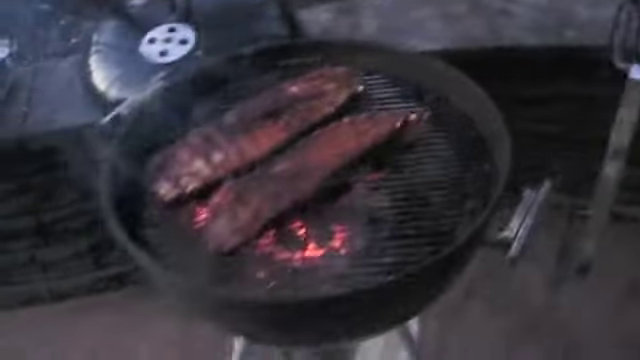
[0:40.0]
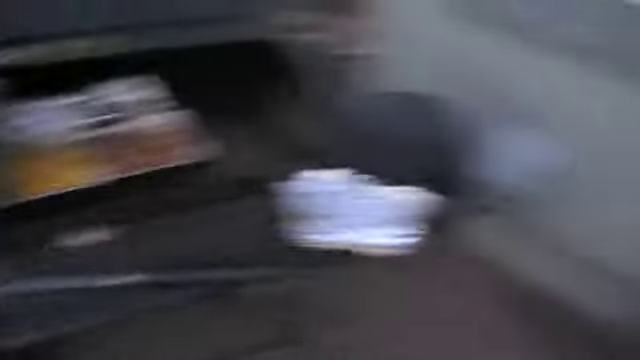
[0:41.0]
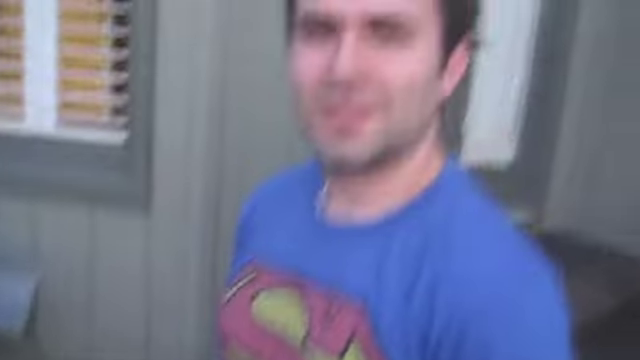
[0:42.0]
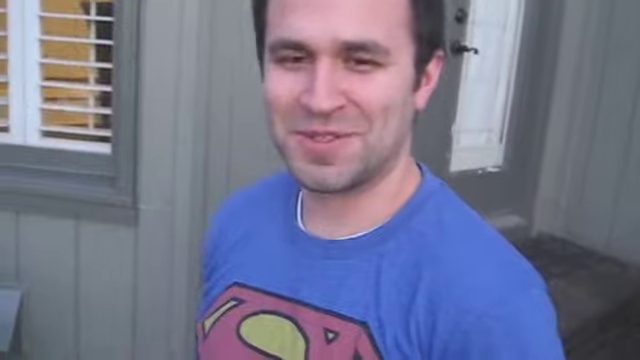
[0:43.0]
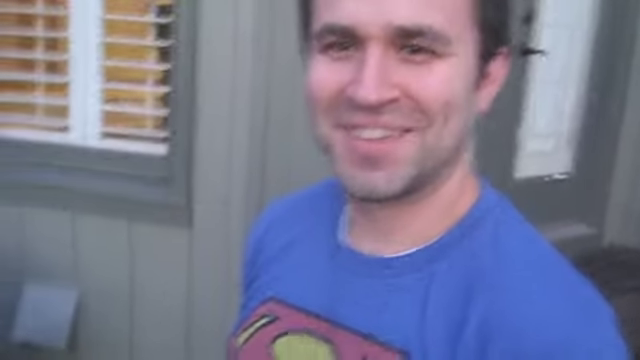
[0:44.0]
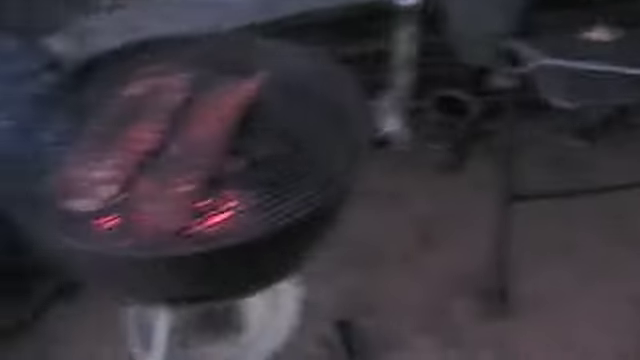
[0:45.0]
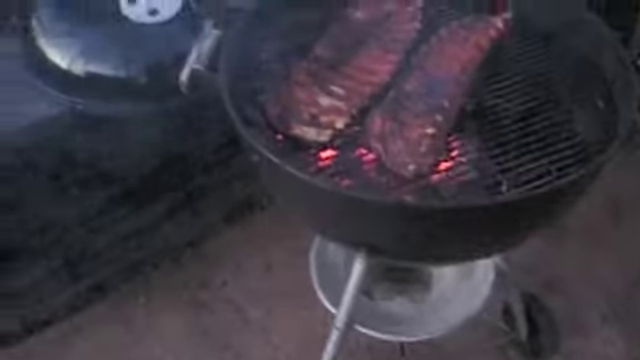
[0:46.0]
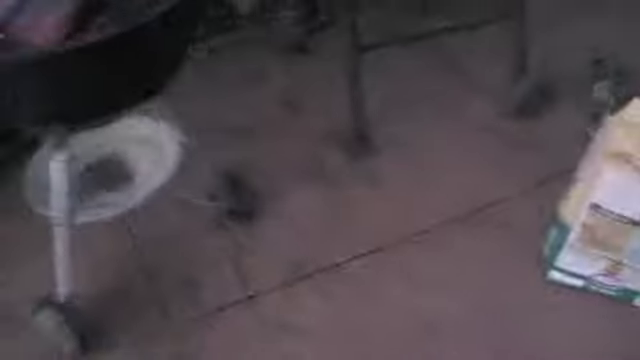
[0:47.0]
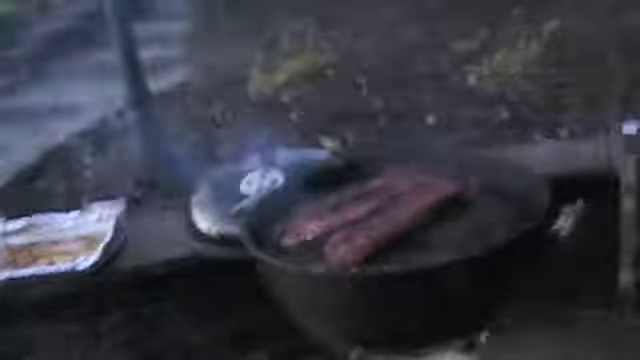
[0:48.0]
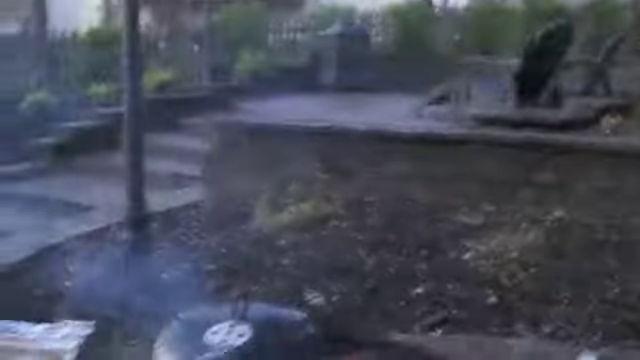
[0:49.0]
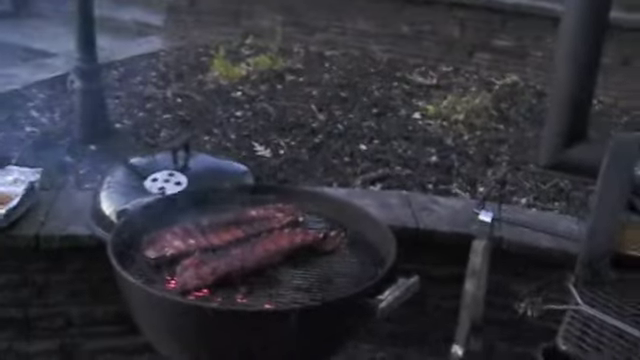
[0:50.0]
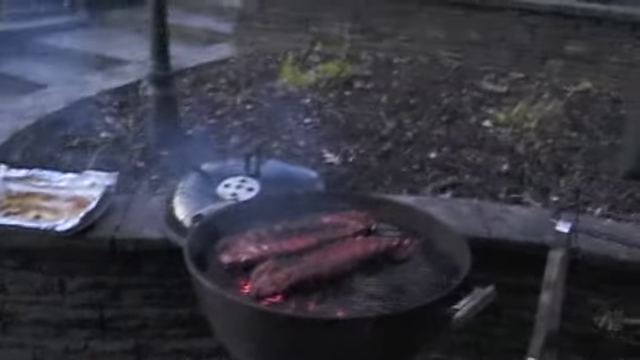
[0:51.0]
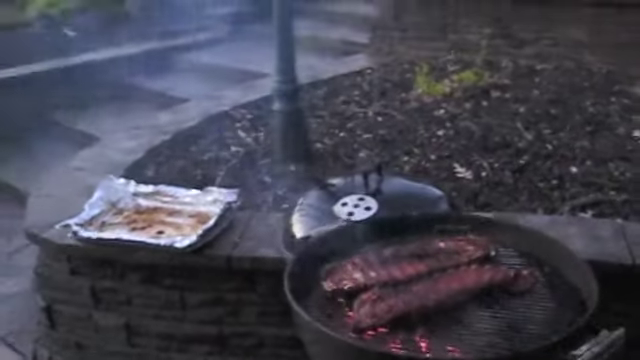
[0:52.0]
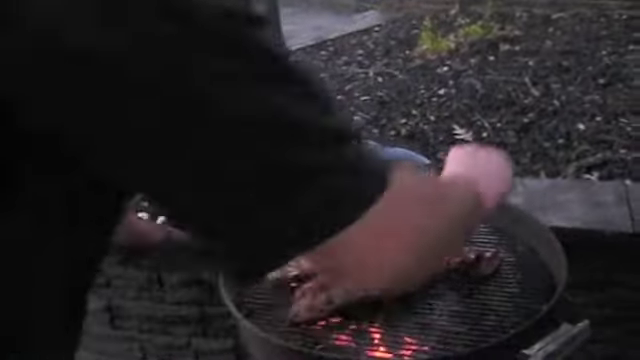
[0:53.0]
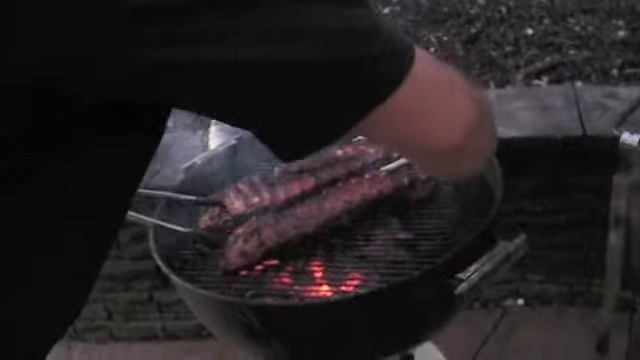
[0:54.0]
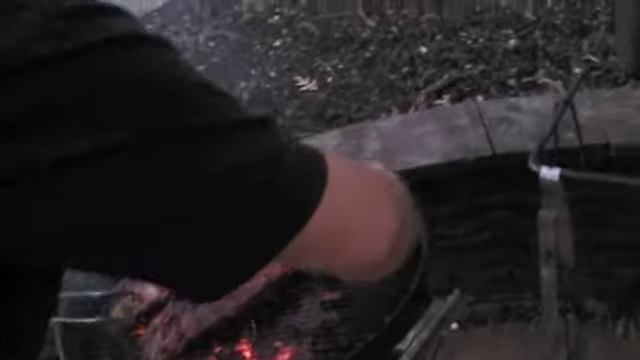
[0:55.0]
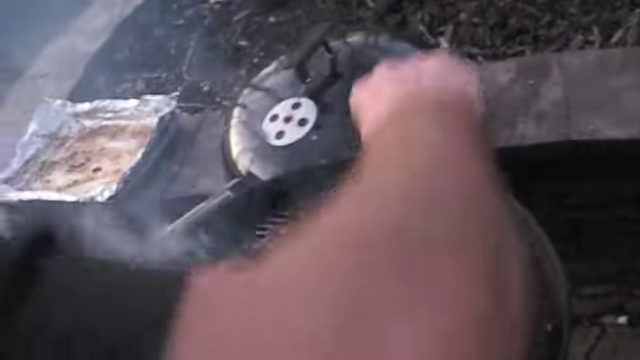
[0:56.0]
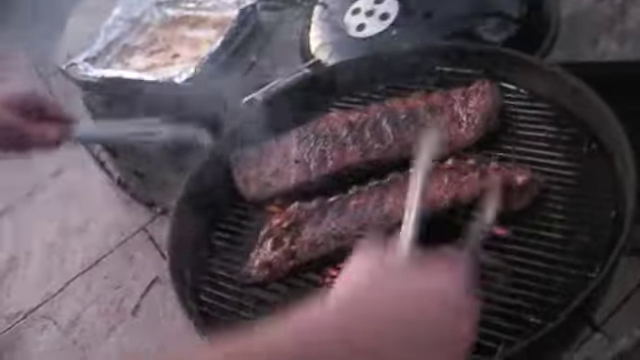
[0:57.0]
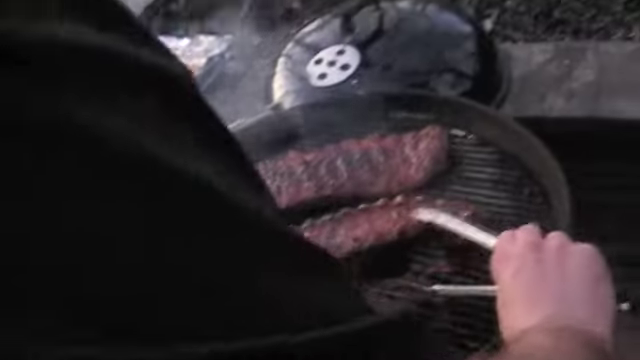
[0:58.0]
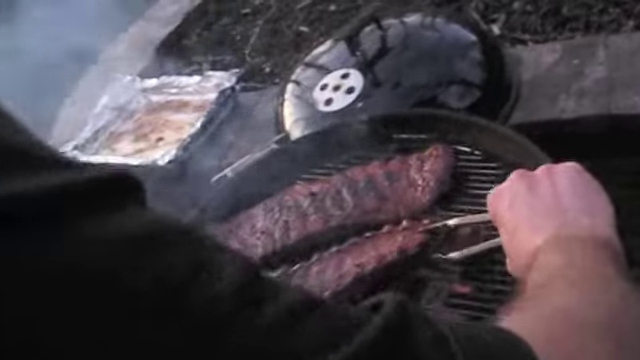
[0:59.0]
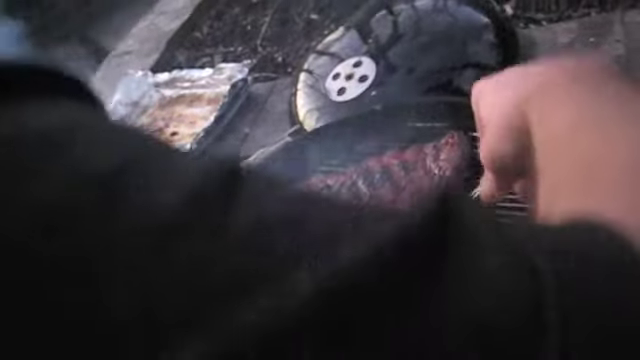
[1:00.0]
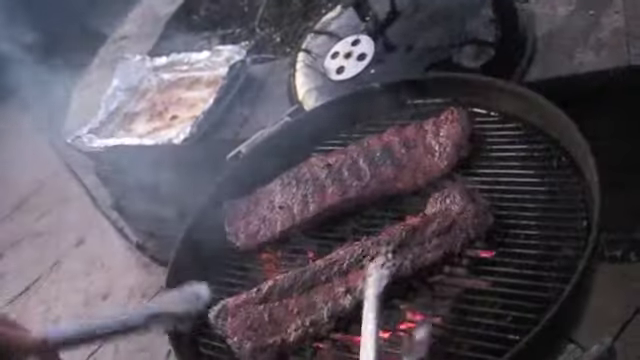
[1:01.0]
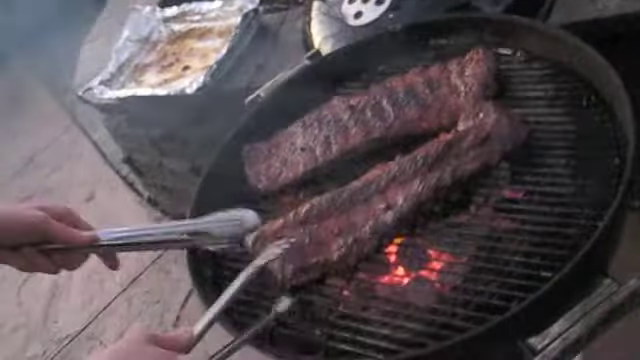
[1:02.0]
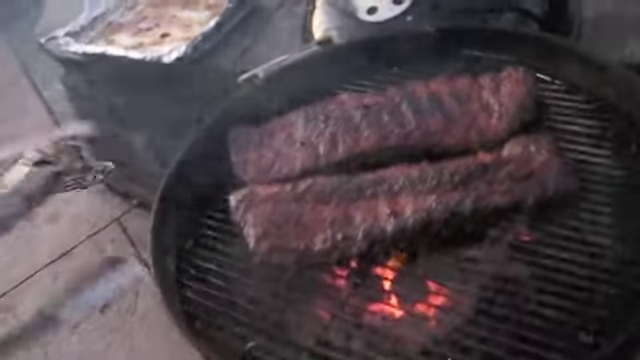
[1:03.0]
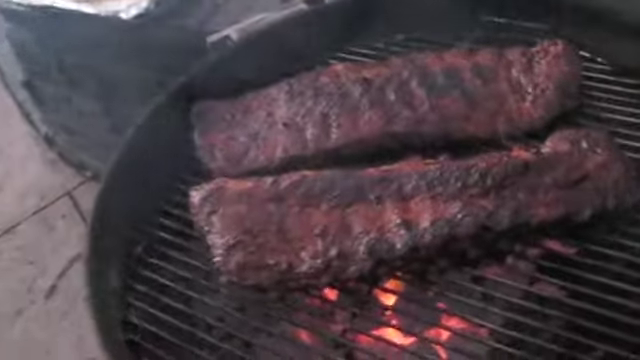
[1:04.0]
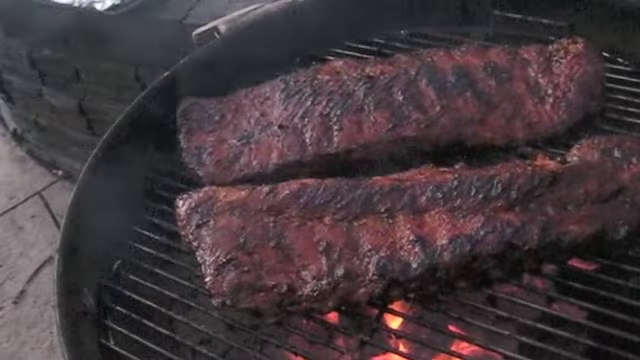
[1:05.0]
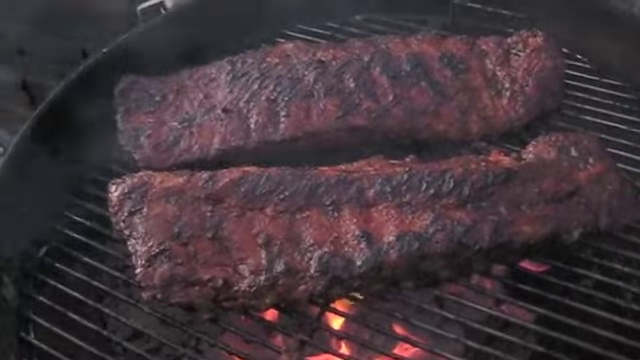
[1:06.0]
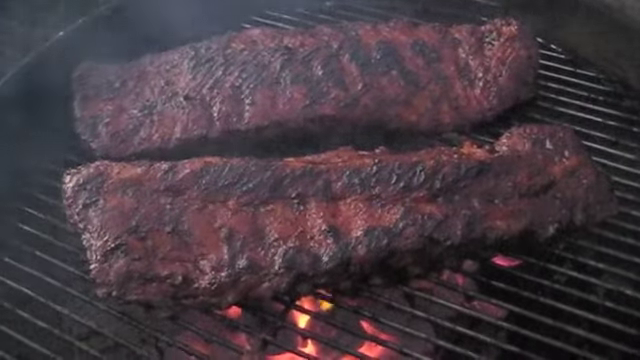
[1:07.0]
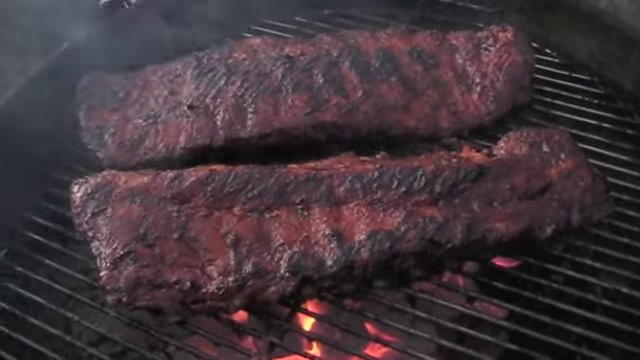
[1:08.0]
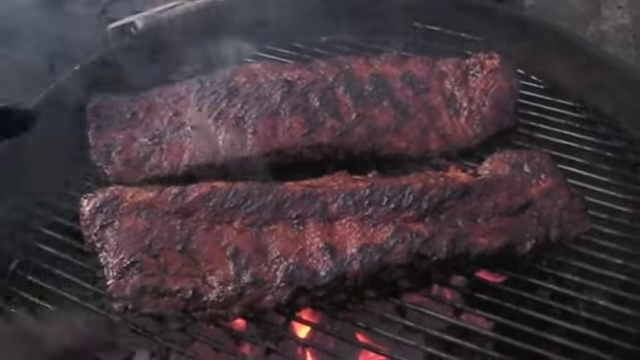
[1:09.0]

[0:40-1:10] Big ribs are being fried. The view shows a person busy with the meat. A white person wearing a blue Superman t-shirt appears and looks happy. Another person, wearing a black t-shirt, is busy at the stand, so there appear to be two people. A person is holding a can of a drink.